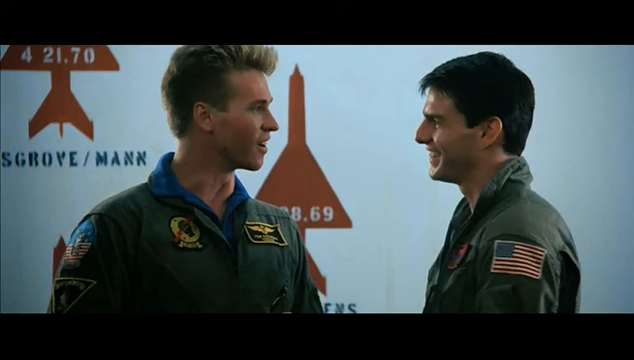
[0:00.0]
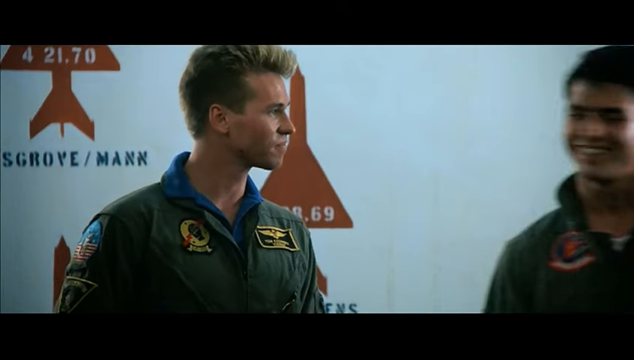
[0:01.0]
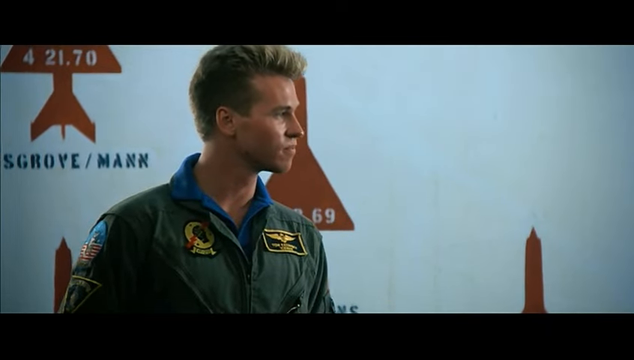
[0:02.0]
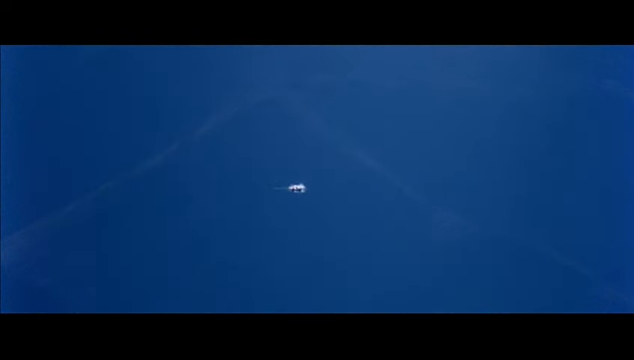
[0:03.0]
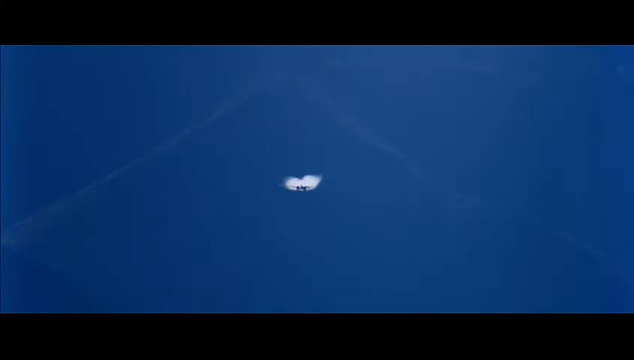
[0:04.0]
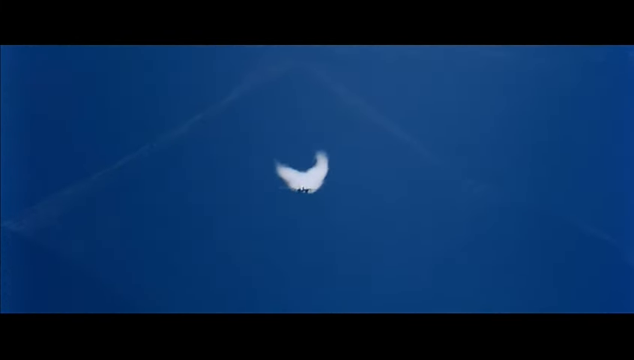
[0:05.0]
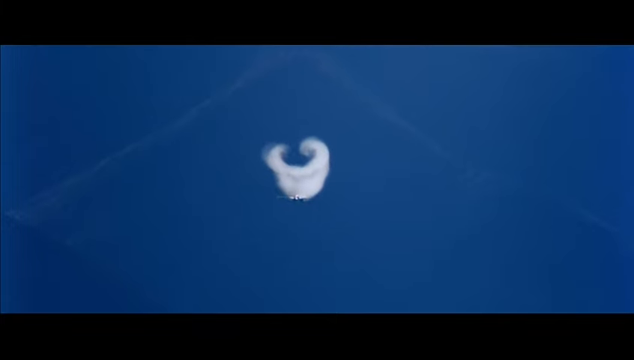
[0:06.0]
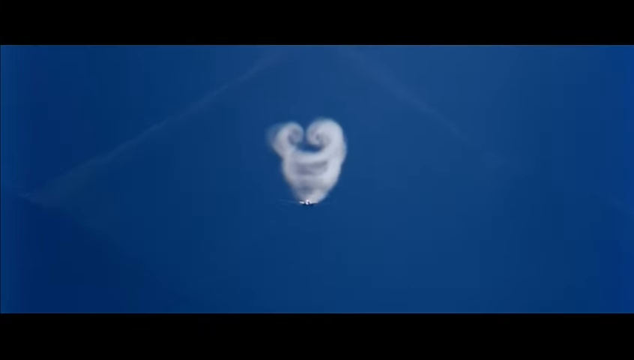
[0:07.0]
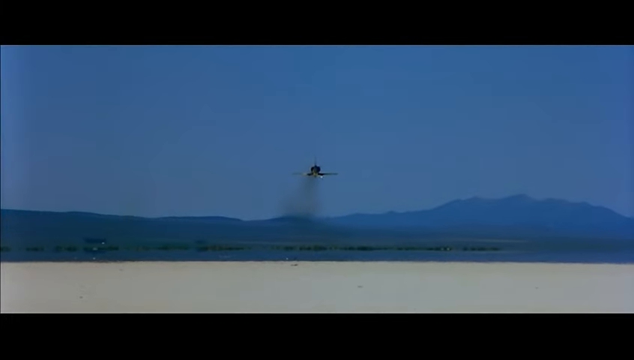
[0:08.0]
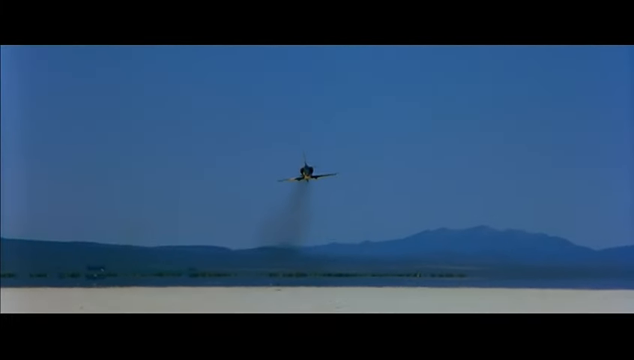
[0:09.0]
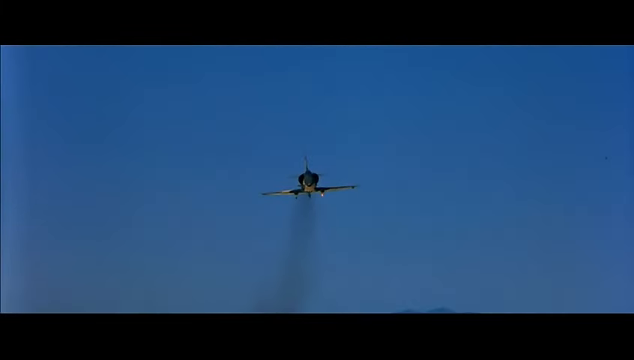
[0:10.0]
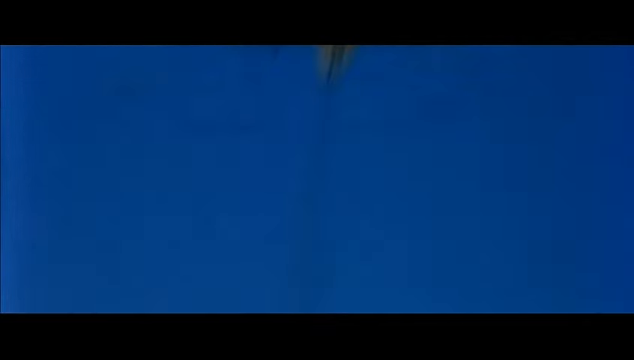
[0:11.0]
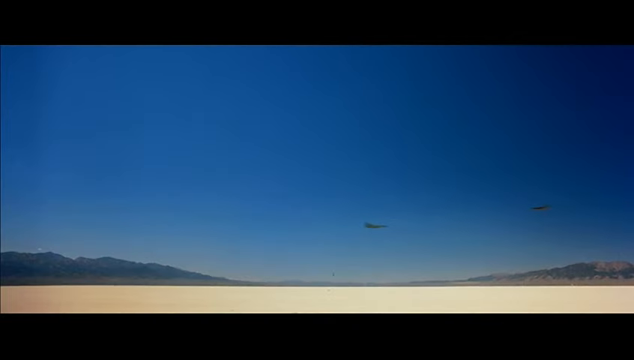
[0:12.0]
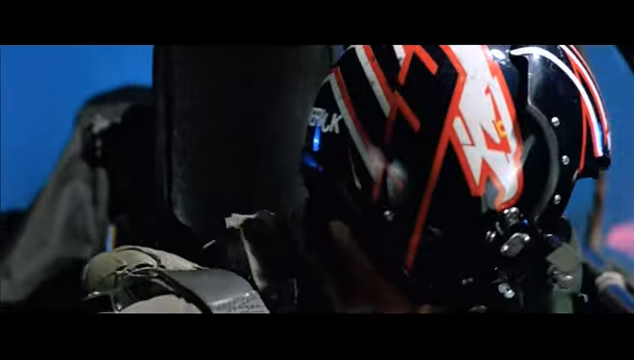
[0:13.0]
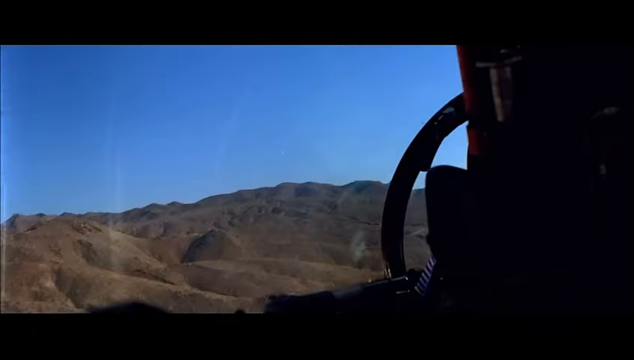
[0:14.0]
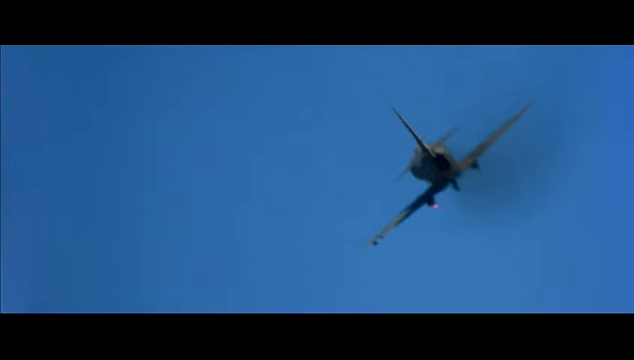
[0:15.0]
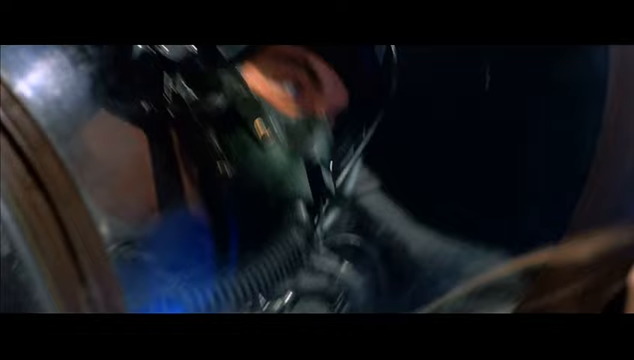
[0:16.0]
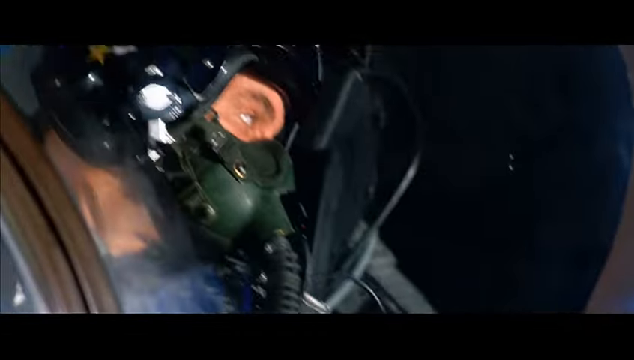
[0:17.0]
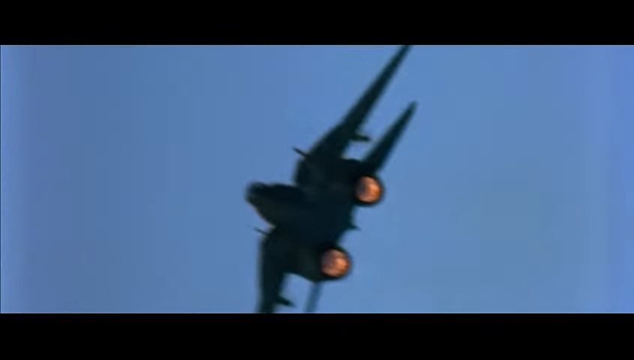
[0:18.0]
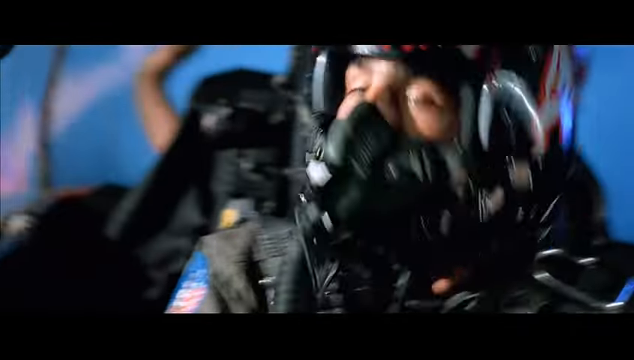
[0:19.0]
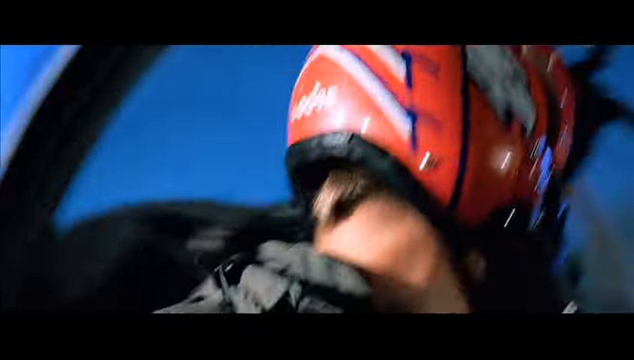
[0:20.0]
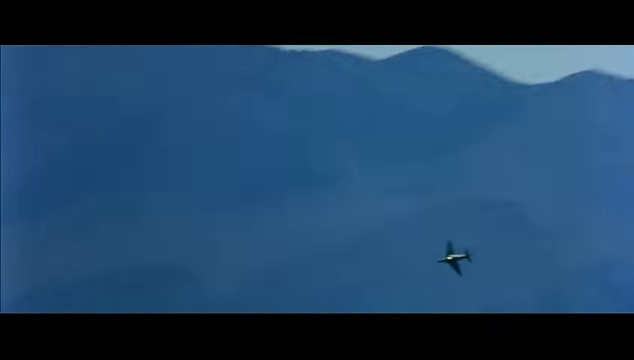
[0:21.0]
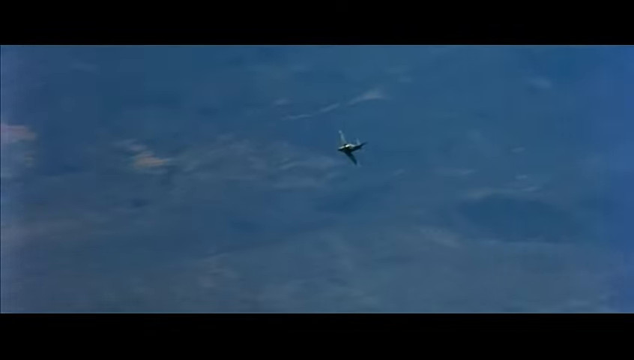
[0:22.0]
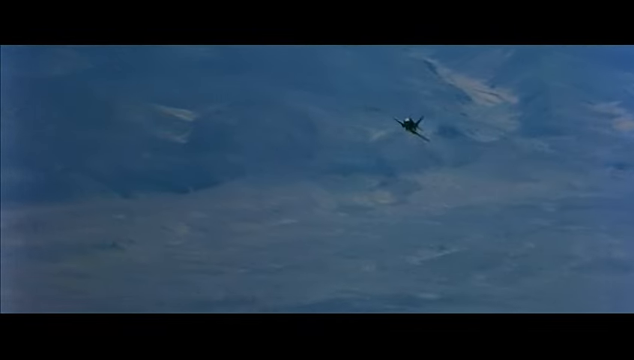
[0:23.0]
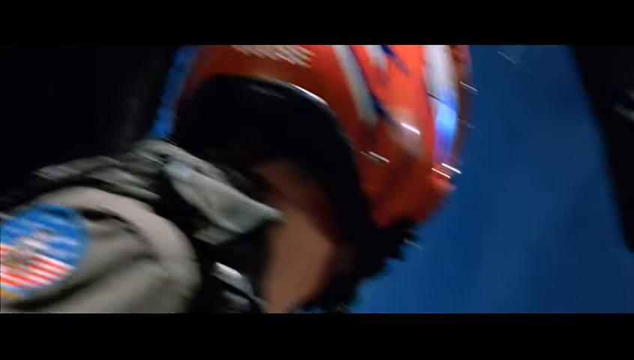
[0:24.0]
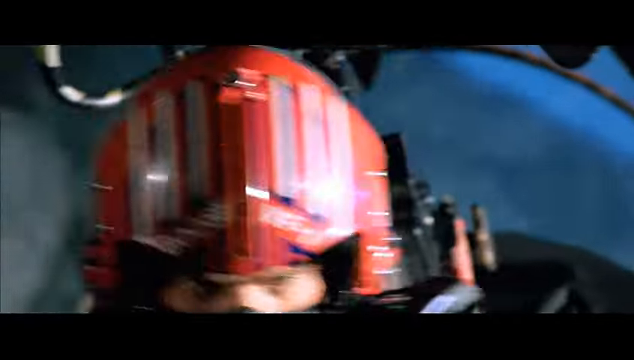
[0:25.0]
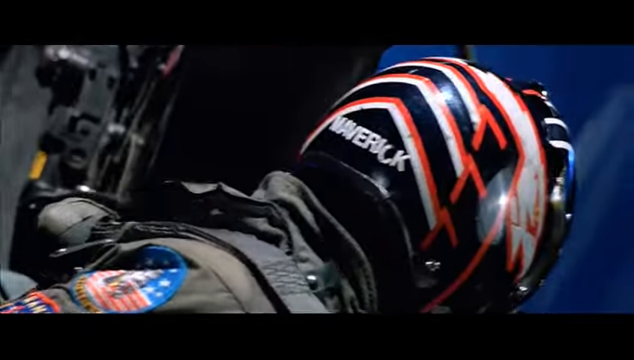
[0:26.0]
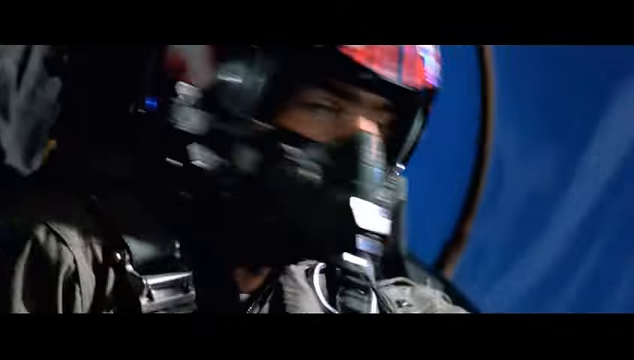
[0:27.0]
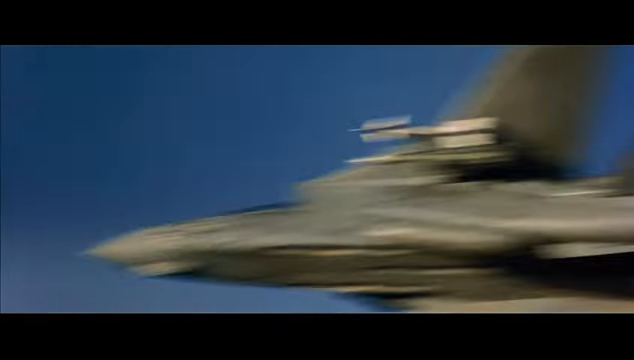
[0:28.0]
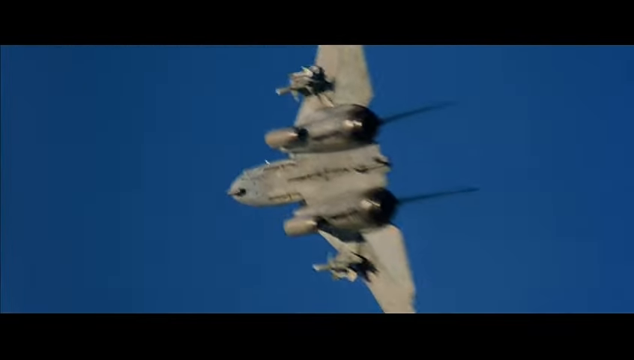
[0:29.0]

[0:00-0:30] Two men are on screen. On the right is the actor Tom Cruise, who has short dark hair and wears an American Air Force uniform with an American flag on his left shoulder. He is talking to a man on the left, the actor Val Kilmer, who has spiky blonde hair and also wears an American Air Force jumpsuit. Cruise leaves, and Kilmer watches him go, looking sour-faced. The scene cuts to a plane flying towards the camera. In another shot a jet flies overhead very fast, and the two planes pass each other very close. One pilot spins around to his left as if to see what just happened, and the other pilot has an intent look on his face; both wear oxygen masks. Both pilots seem to be looking over their shoulders as if watching each other. The back of one helmet has the word "goose" on it, and the back of another helmet, which is black, white and red, has the word "maverick". A jet fighter is then seen on its side with smoke coming out of the back.